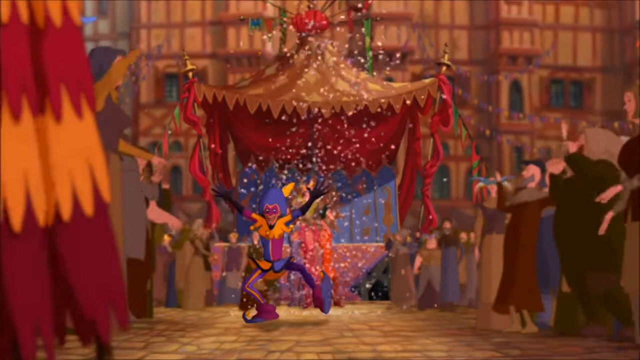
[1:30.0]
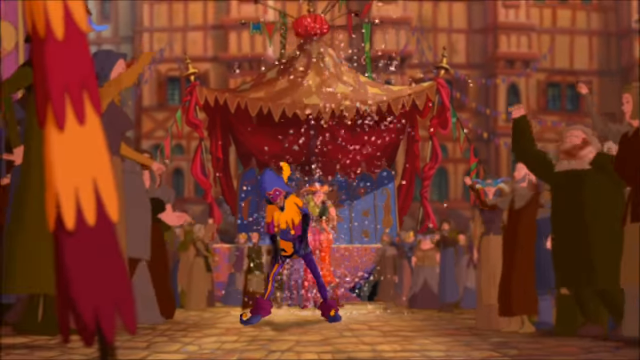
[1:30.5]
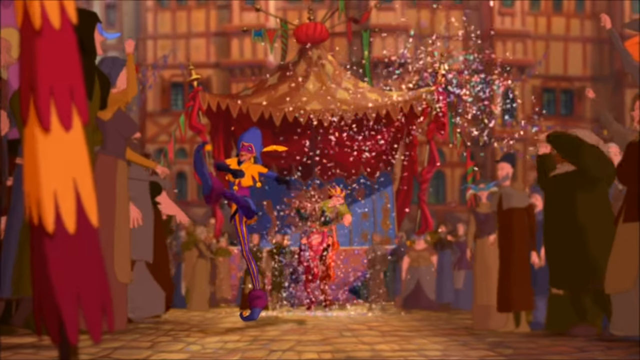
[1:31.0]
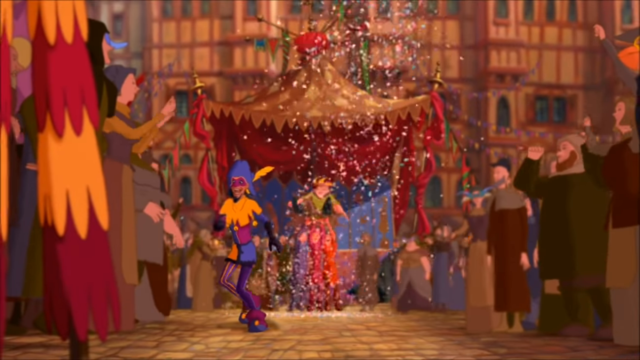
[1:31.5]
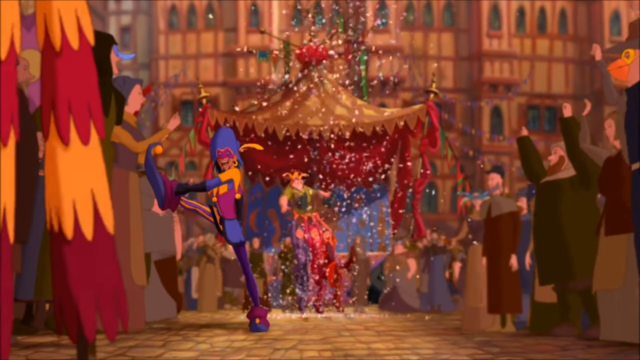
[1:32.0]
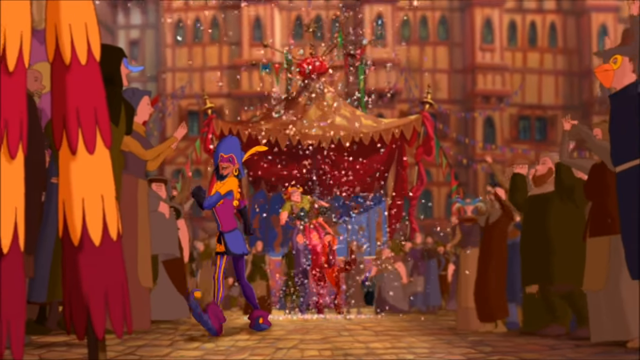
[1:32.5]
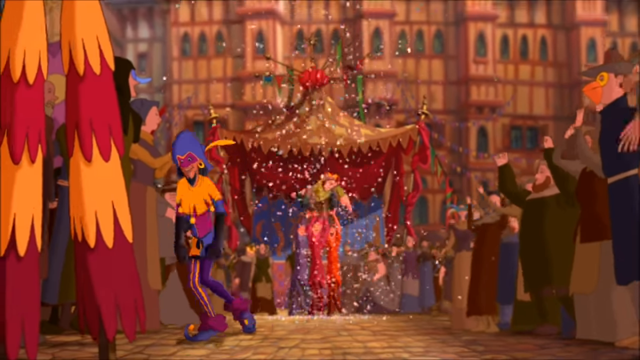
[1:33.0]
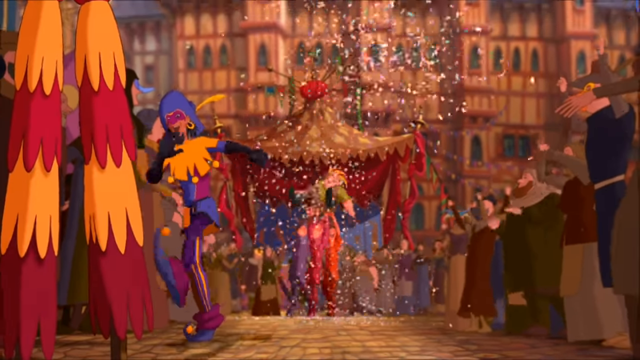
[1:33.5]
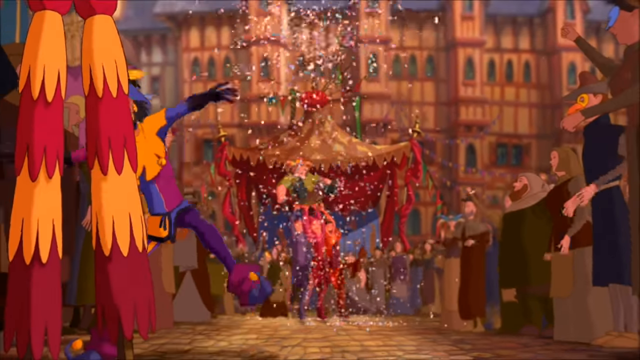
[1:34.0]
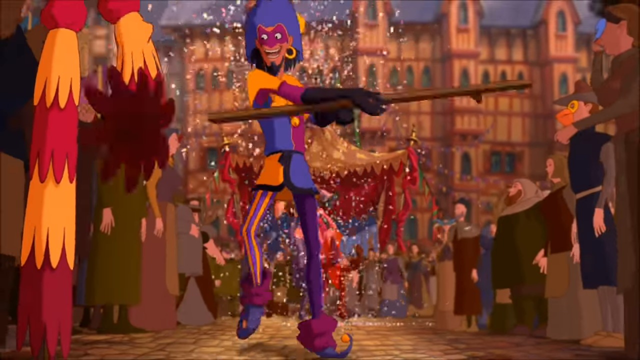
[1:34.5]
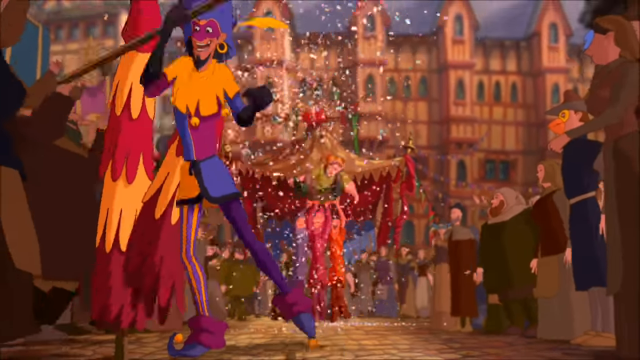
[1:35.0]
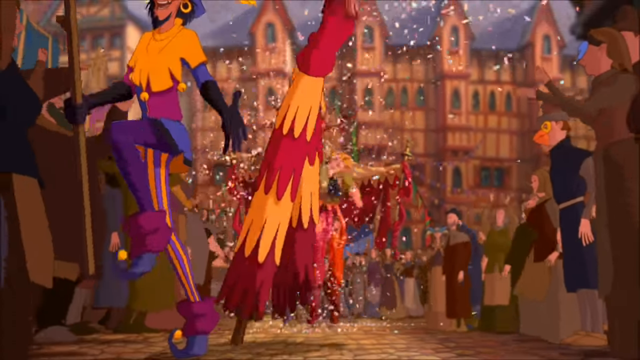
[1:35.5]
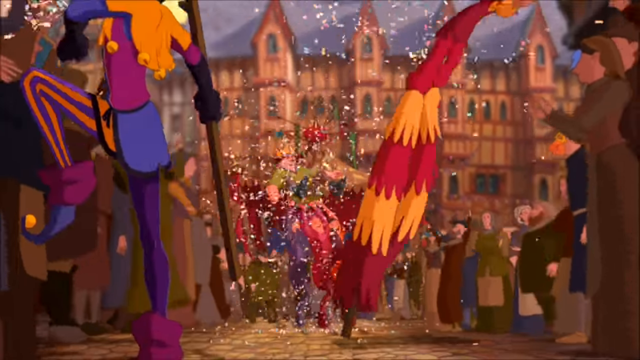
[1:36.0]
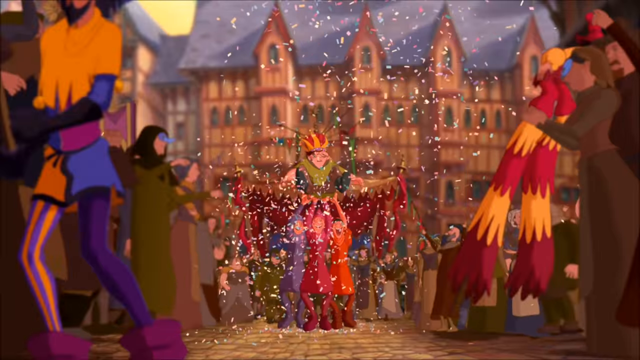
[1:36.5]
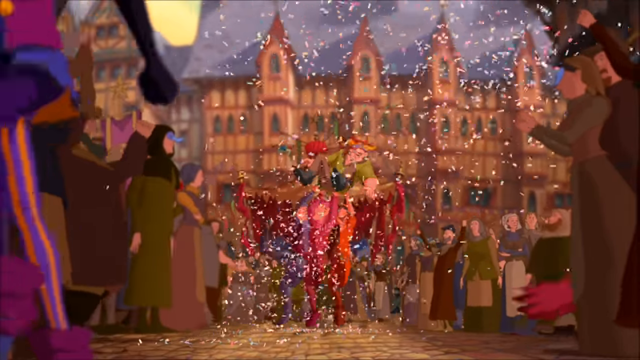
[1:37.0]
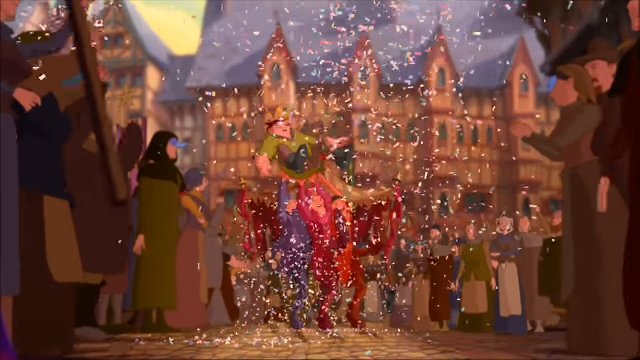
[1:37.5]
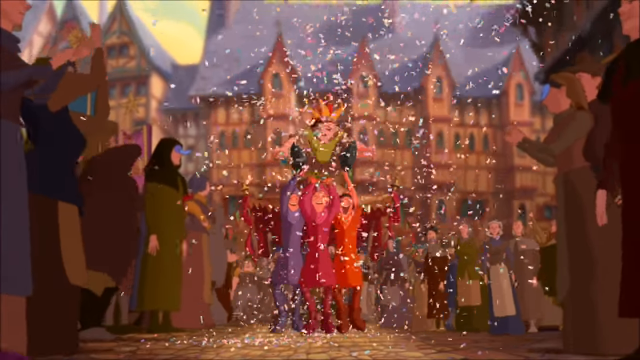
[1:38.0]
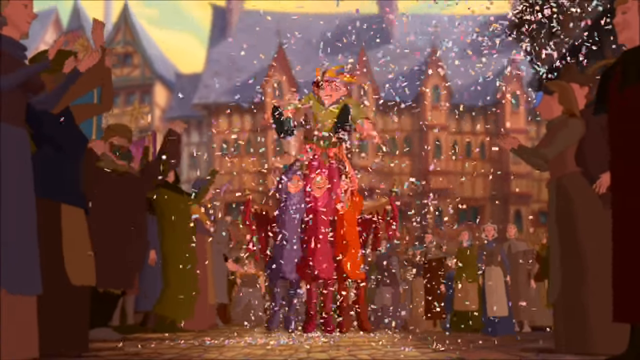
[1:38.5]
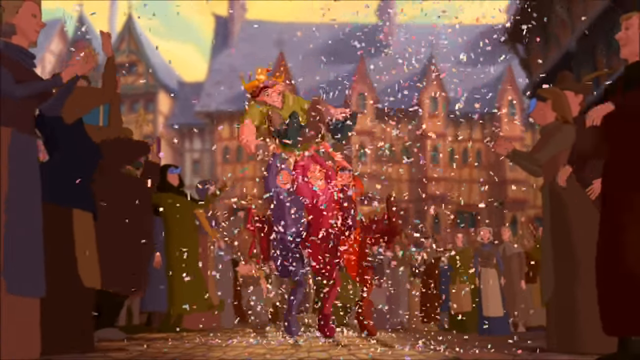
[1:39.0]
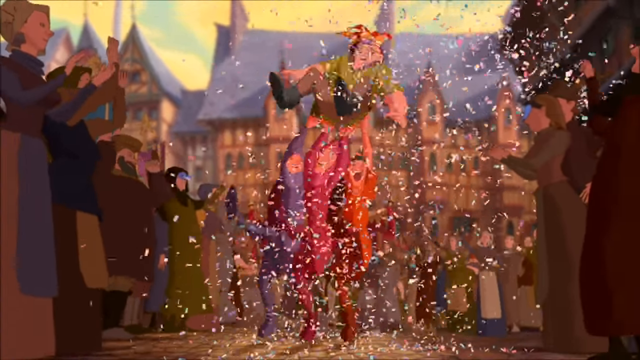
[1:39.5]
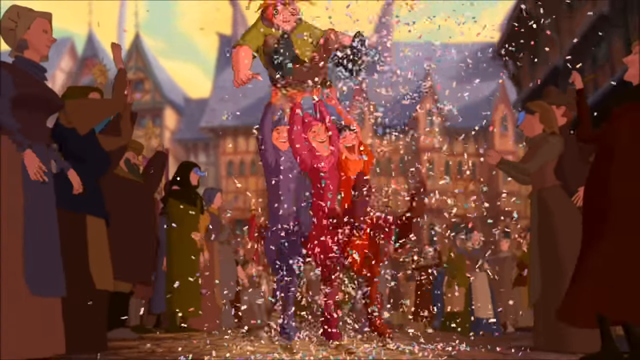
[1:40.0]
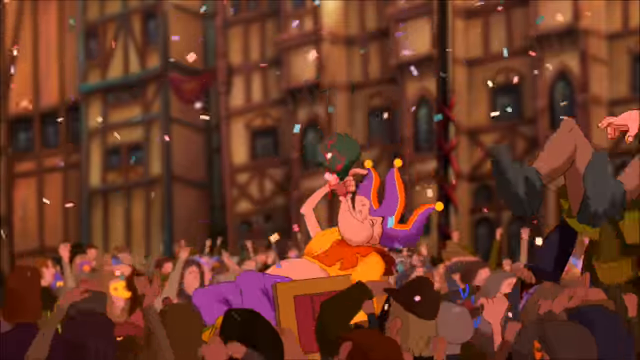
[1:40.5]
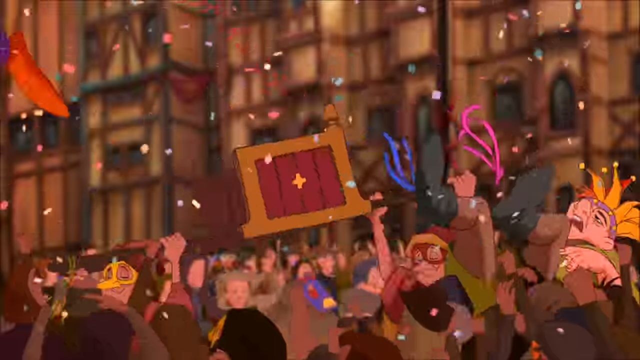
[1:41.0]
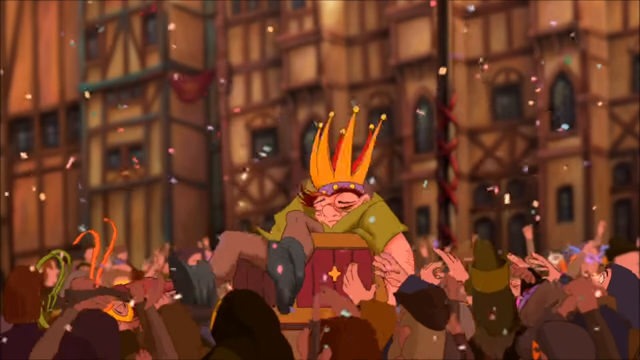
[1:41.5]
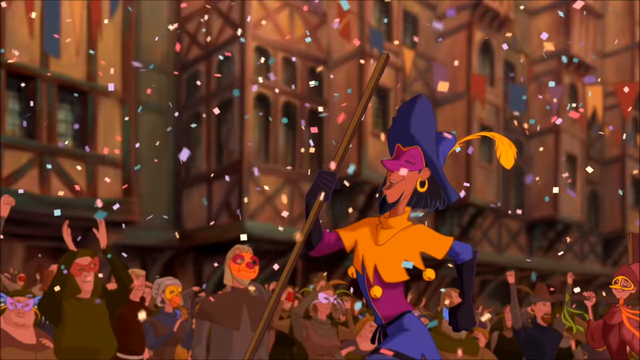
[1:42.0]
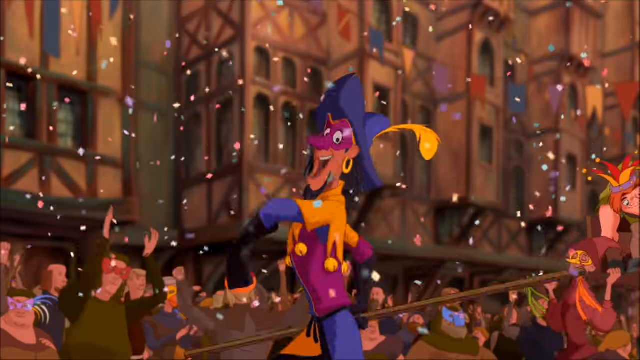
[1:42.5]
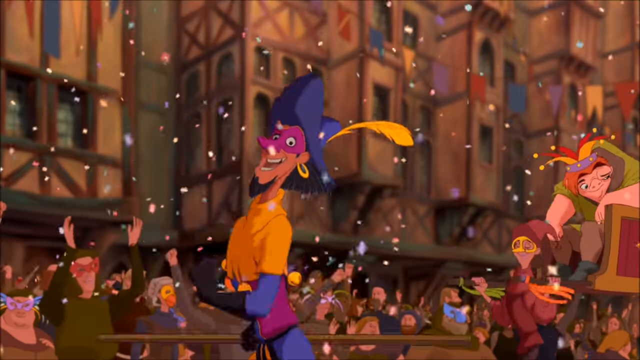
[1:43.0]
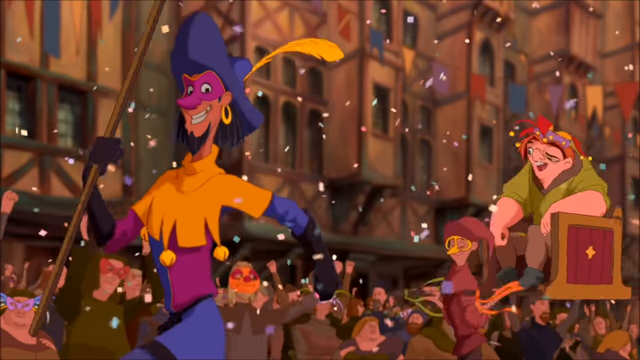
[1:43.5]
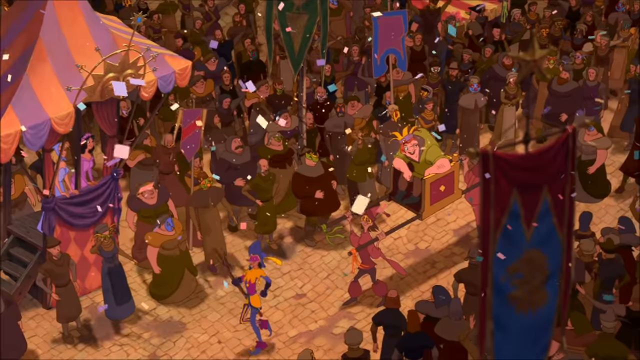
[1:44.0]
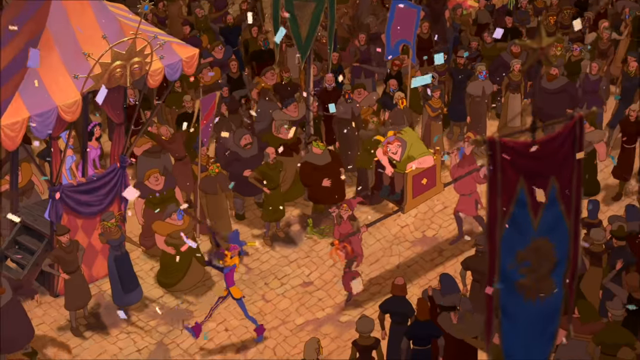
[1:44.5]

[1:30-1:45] A passageway opens in the crowd. Down it the jester prances, gesturing wildly and dancing, while behind him in the background the newly crowned king, the green-clad hunchback, is carried on the shoulders of the crowd. They move through the crowd, and the jester appears to be making a lot of noise. A man on stilts walks past, and confetti falls. People seem to even toss the new king, who rides on top of a box carried by the crowd down the passageway, and then is inside the box, being celebrated.